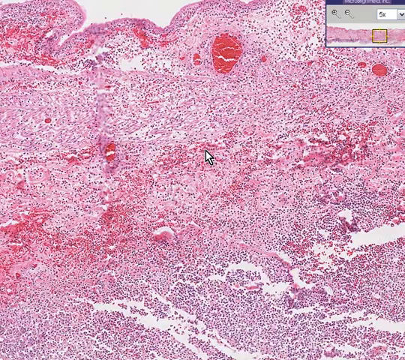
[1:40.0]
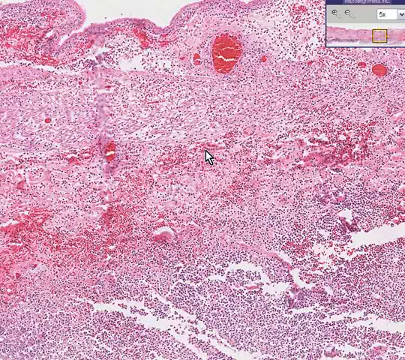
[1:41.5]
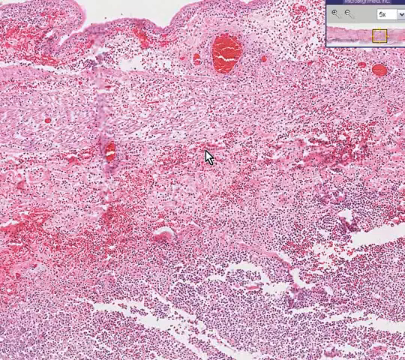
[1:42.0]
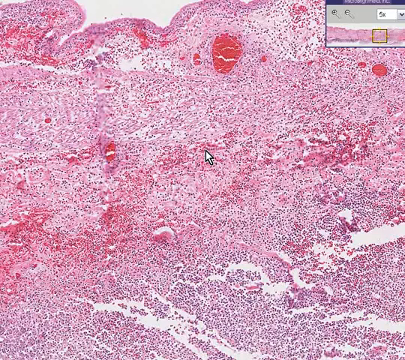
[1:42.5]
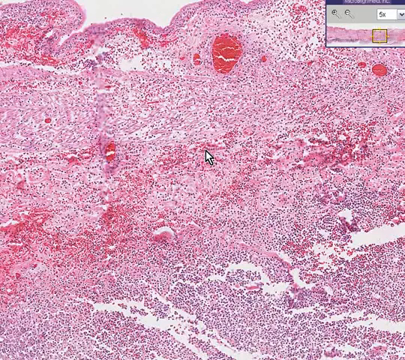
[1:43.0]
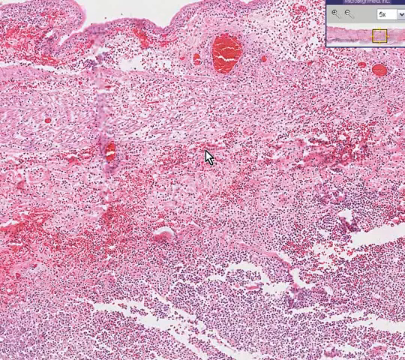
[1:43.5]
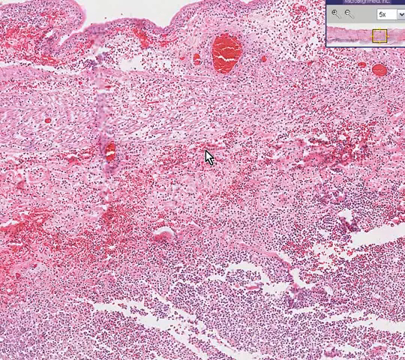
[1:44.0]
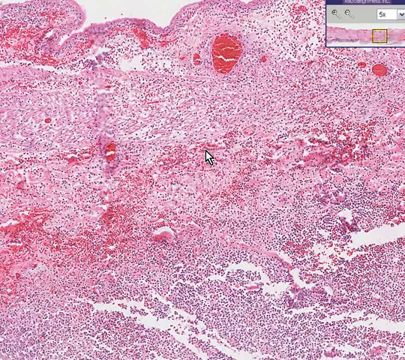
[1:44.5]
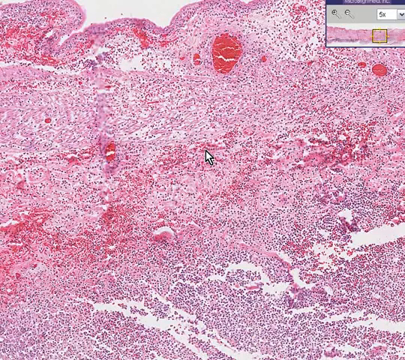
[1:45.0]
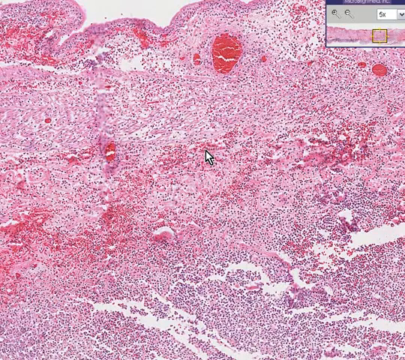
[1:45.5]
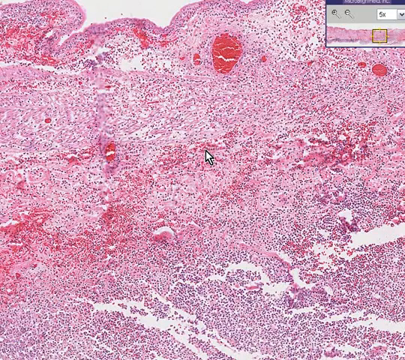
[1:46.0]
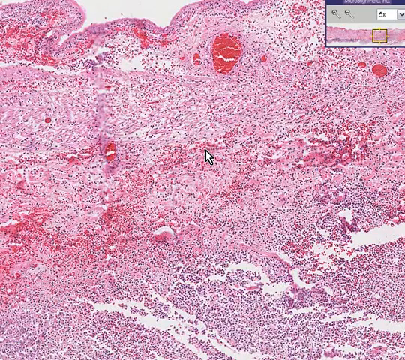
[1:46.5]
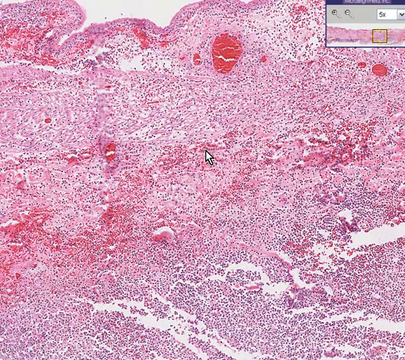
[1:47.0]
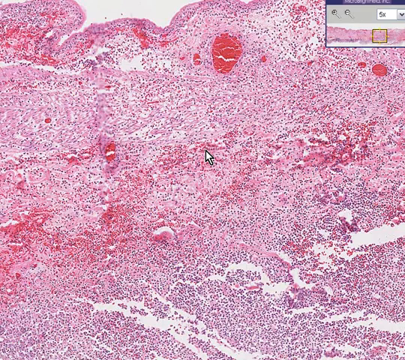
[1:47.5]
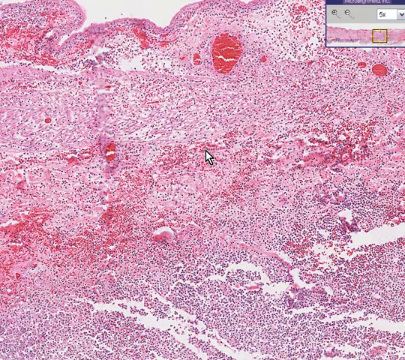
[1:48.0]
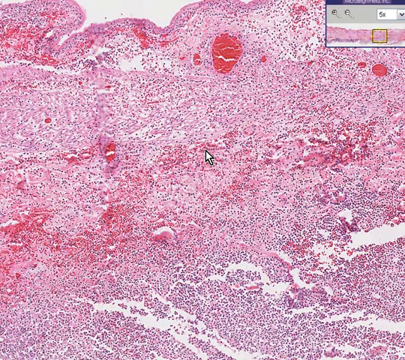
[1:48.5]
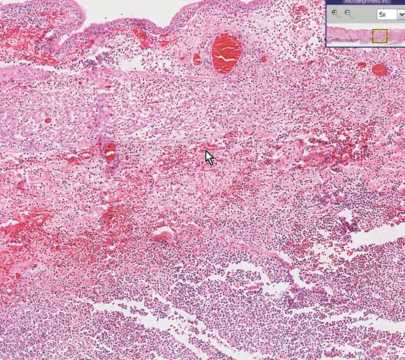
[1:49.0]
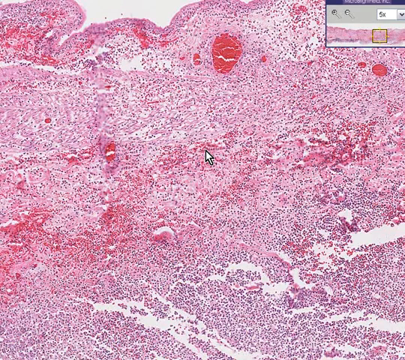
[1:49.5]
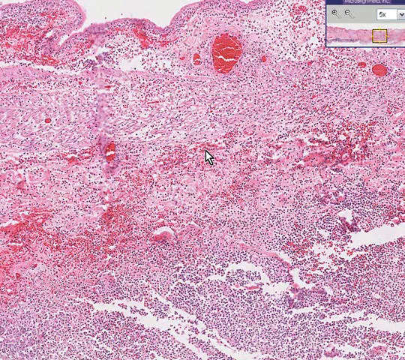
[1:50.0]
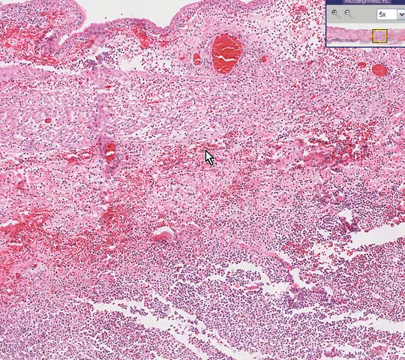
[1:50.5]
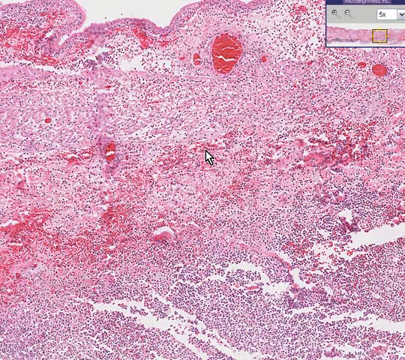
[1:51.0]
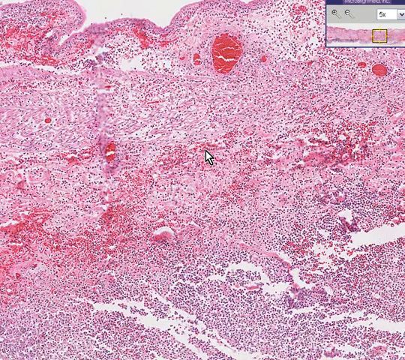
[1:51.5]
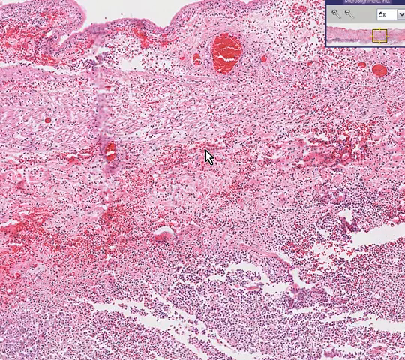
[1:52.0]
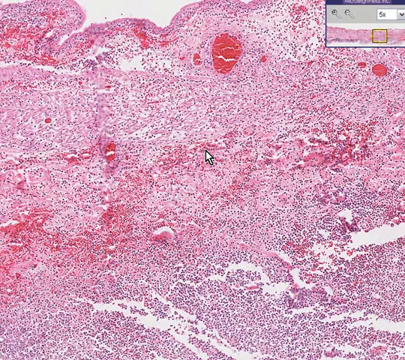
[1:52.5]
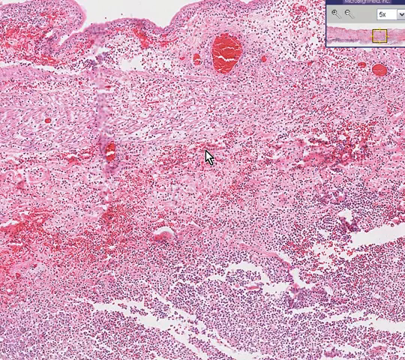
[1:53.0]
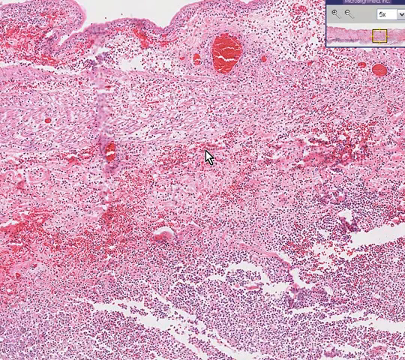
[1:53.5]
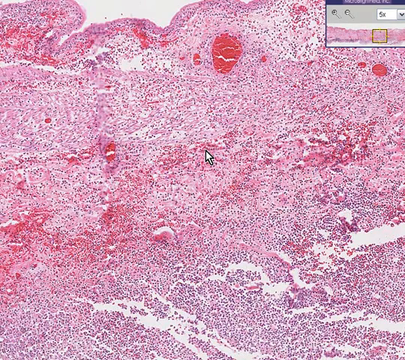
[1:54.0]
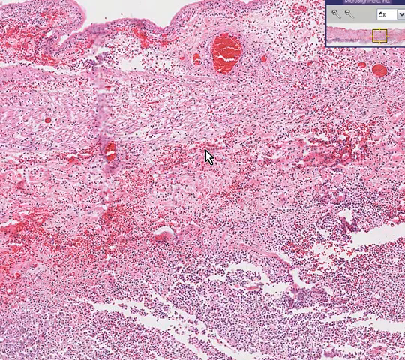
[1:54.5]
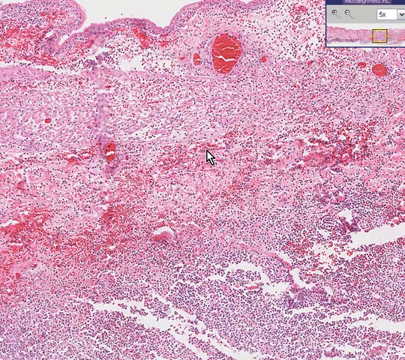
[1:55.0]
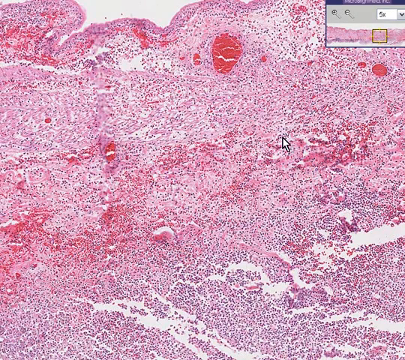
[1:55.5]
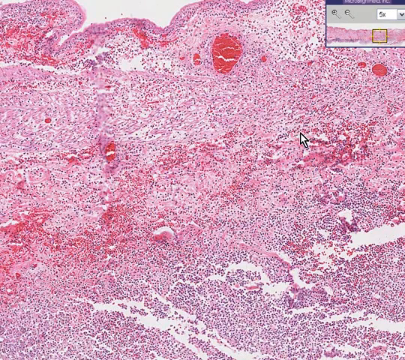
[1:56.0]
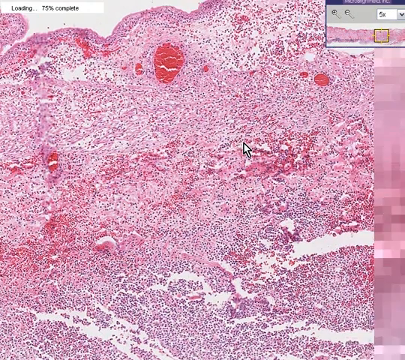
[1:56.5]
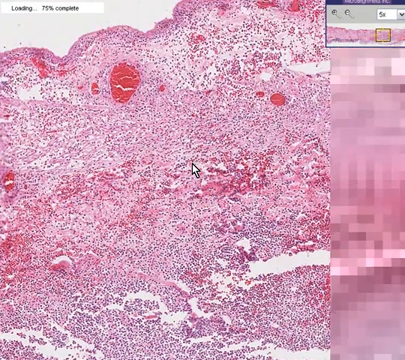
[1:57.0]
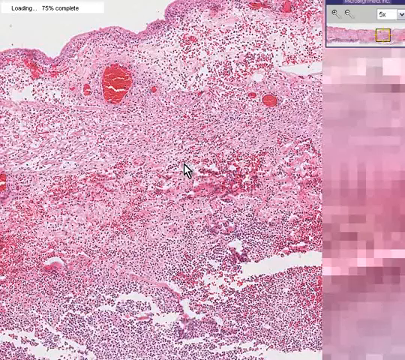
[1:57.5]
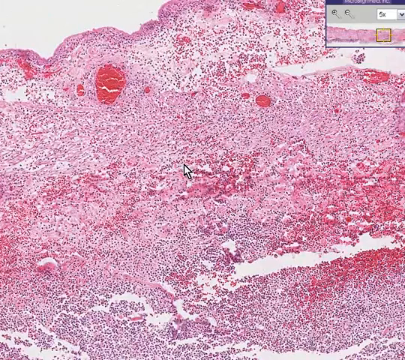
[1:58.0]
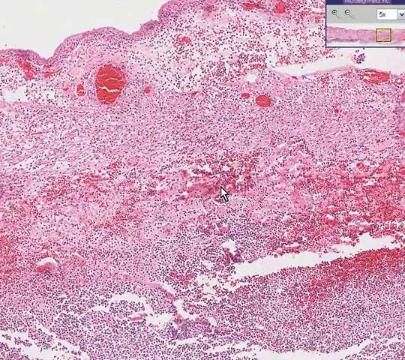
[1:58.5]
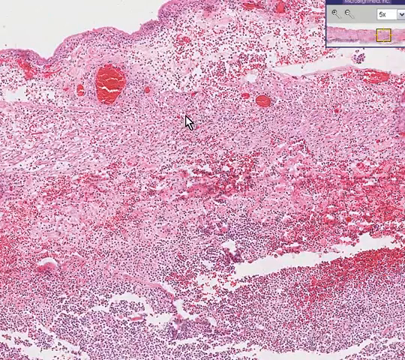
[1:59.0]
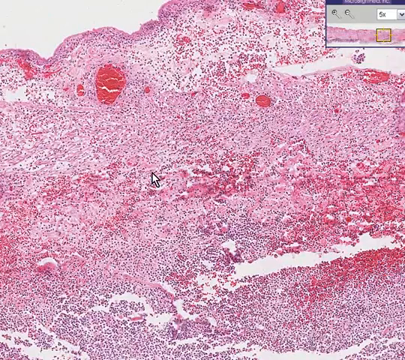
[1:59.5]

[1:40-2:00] The screen shows what looks like a slice of tissue under a microscope, resembling a river flowing. It is pink and purple, with lots of small white lines running through it. An arrow mouse cursor is in the center of the screen. At the top right, the same image appears in a smaller box with a little square showing the current position on the image, and it reads "5x". The cursor sits in the center over a pinkish area of the tissue, doing nothing. It then moves to the right, grabs the screen, and moves the image to the right, then back to the left.